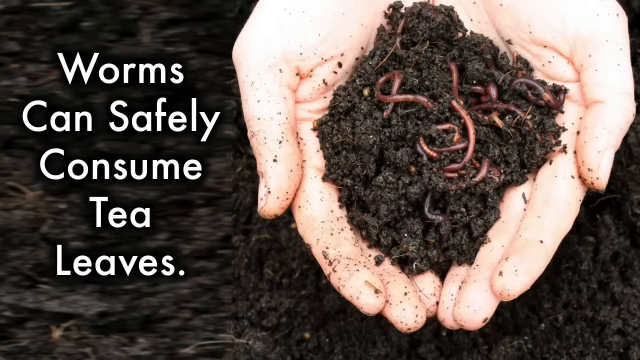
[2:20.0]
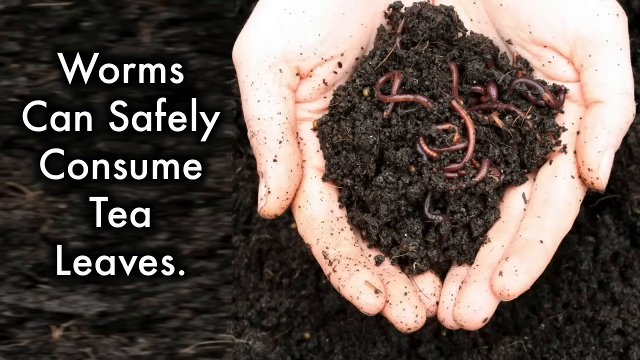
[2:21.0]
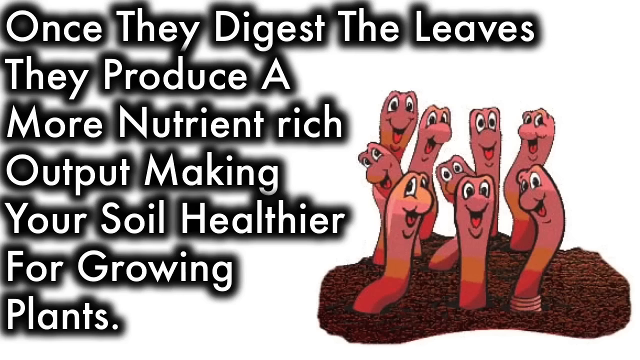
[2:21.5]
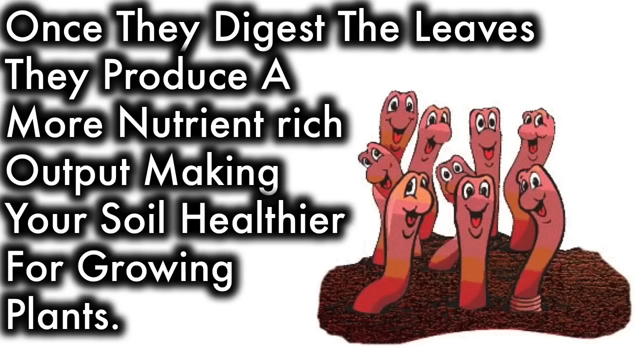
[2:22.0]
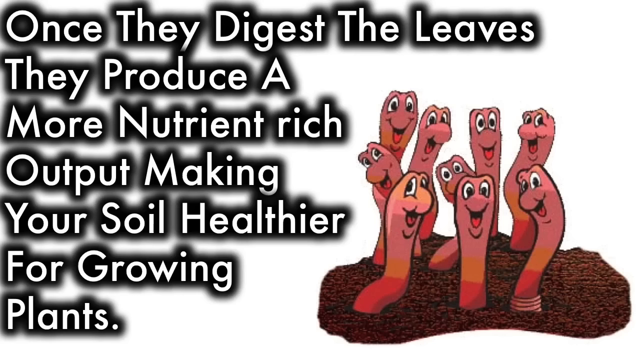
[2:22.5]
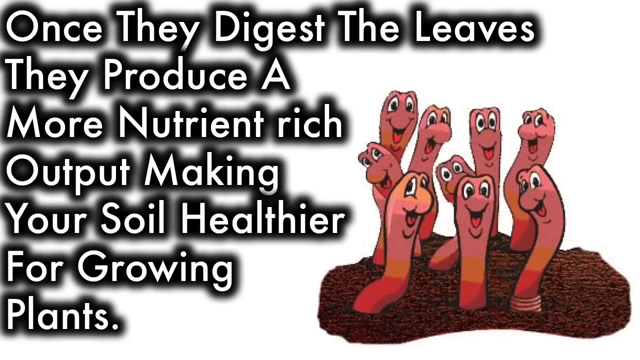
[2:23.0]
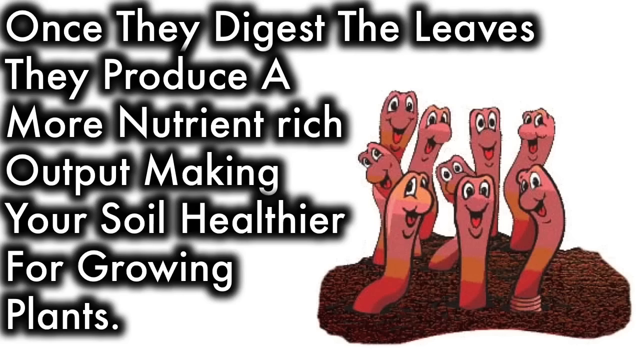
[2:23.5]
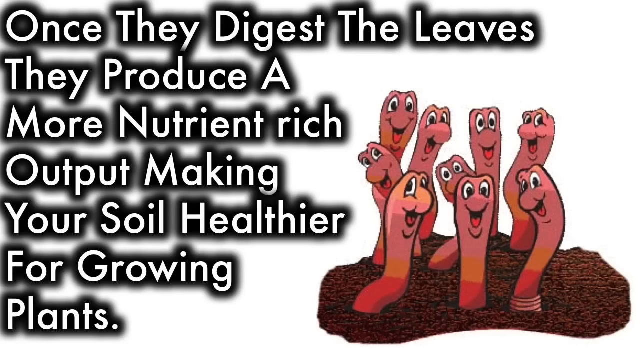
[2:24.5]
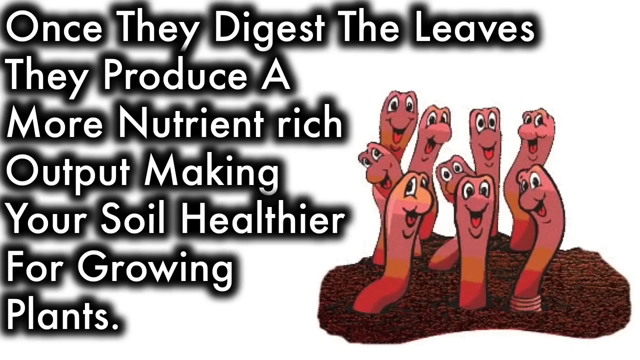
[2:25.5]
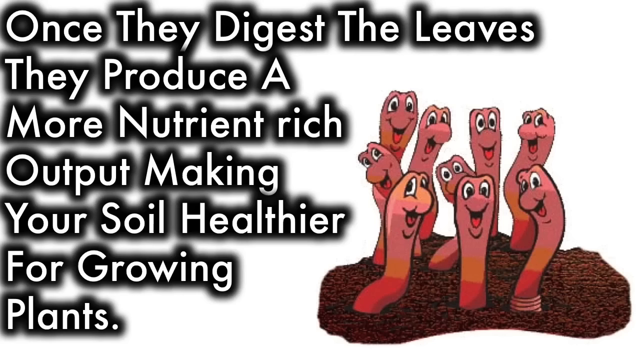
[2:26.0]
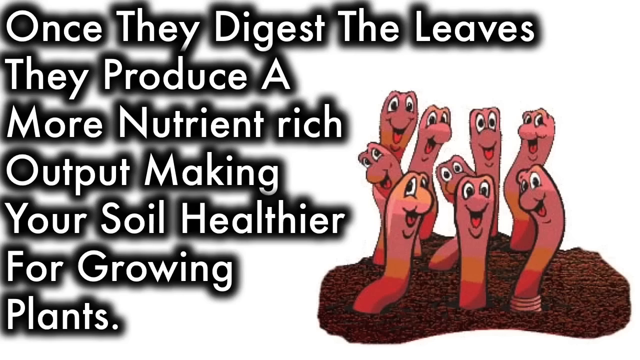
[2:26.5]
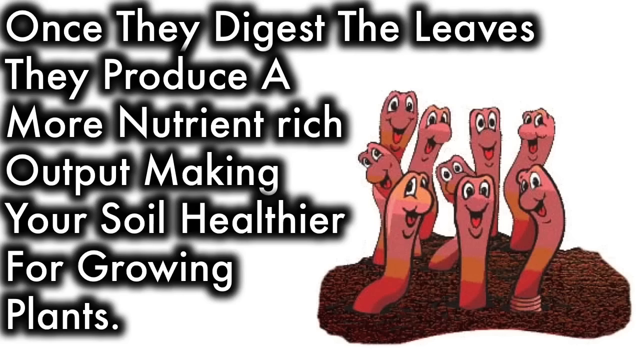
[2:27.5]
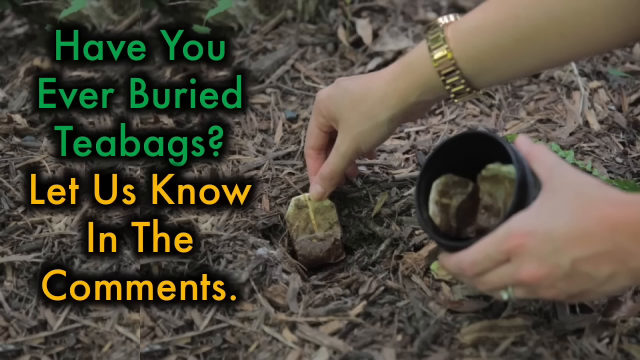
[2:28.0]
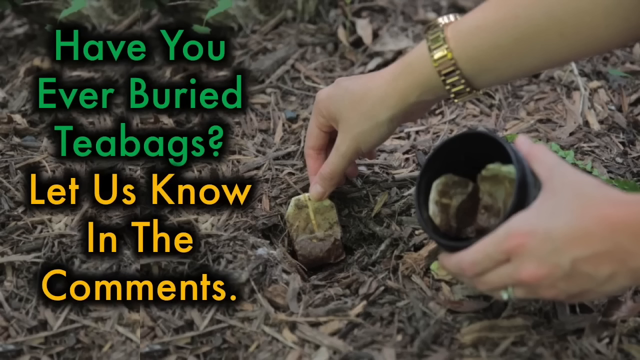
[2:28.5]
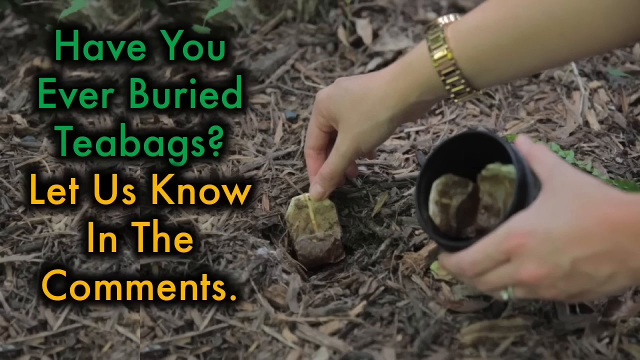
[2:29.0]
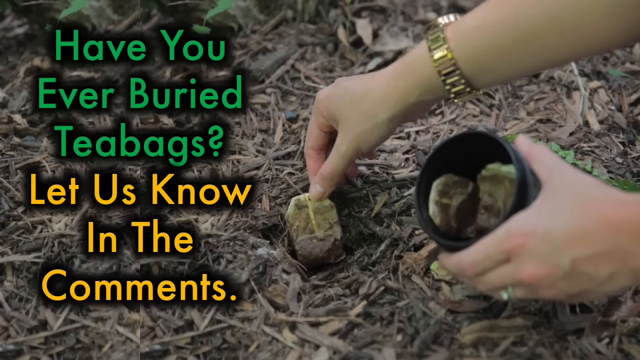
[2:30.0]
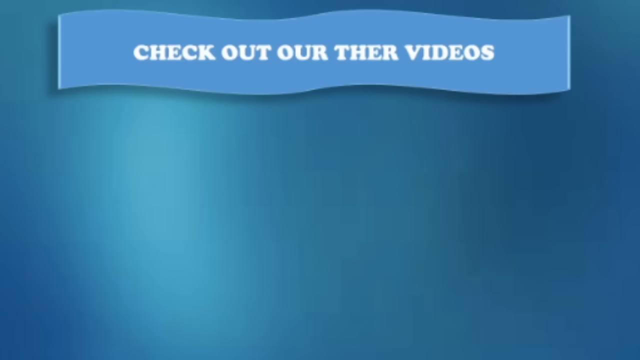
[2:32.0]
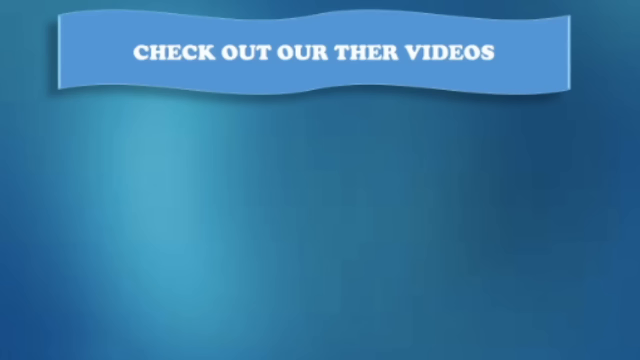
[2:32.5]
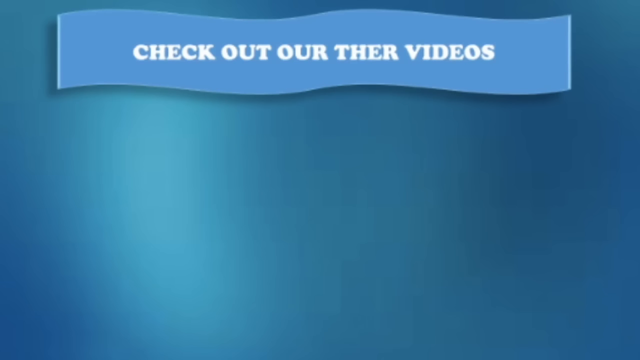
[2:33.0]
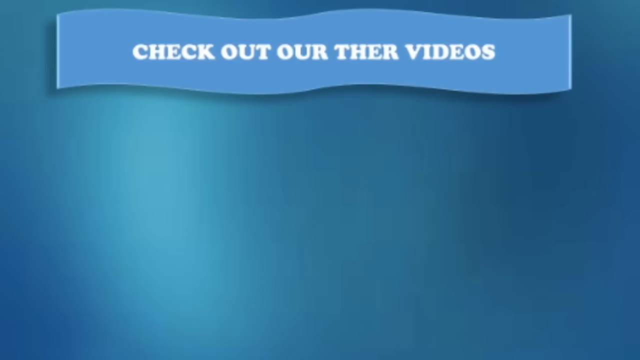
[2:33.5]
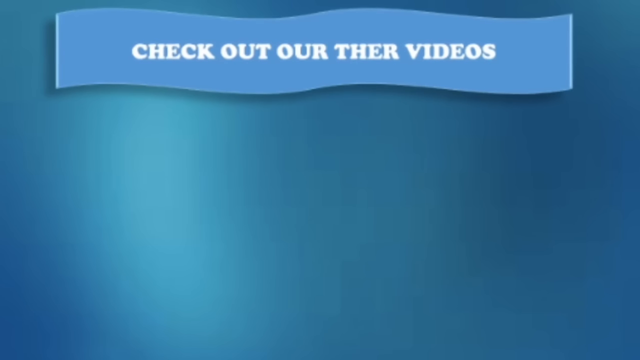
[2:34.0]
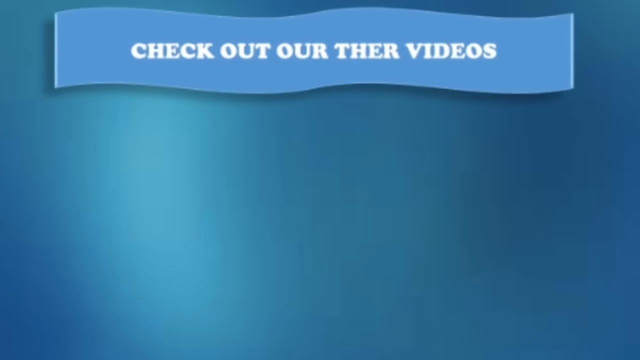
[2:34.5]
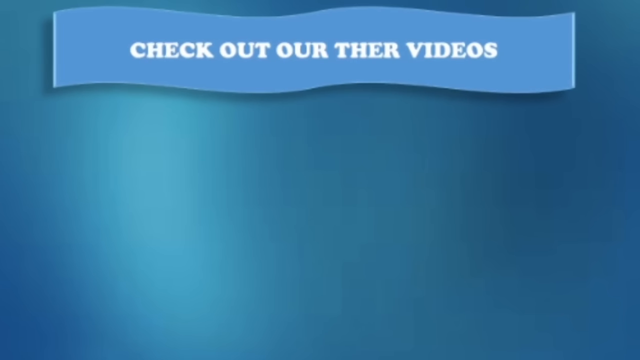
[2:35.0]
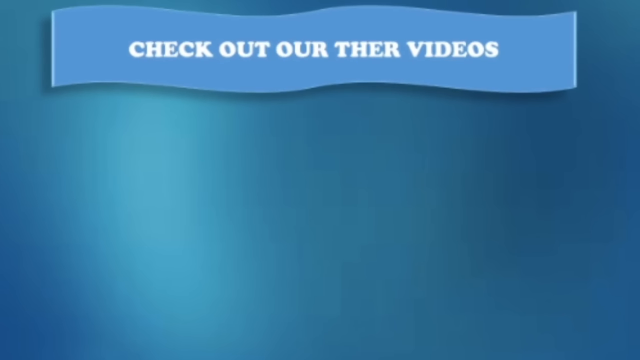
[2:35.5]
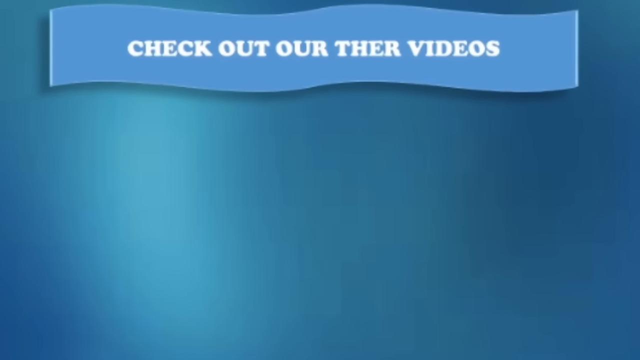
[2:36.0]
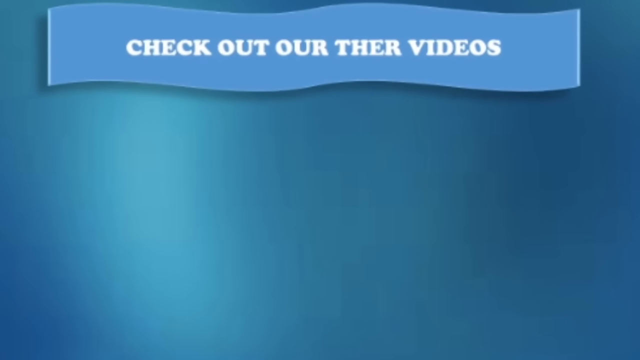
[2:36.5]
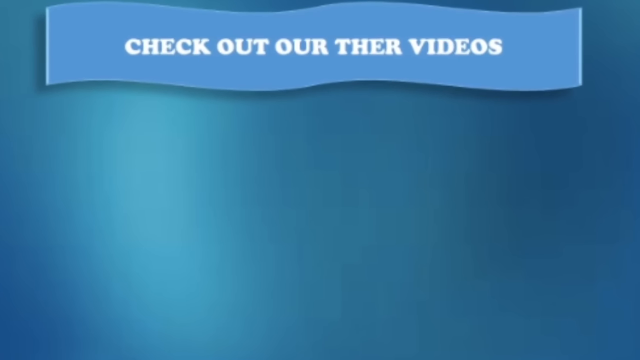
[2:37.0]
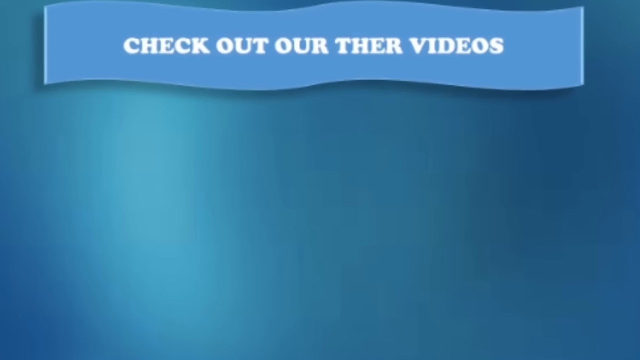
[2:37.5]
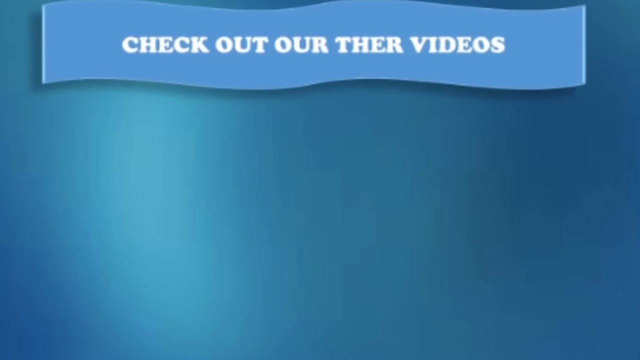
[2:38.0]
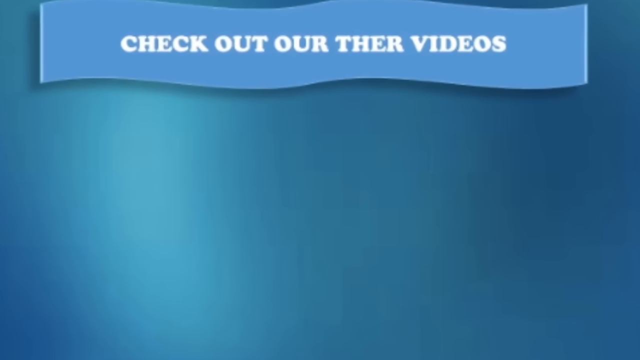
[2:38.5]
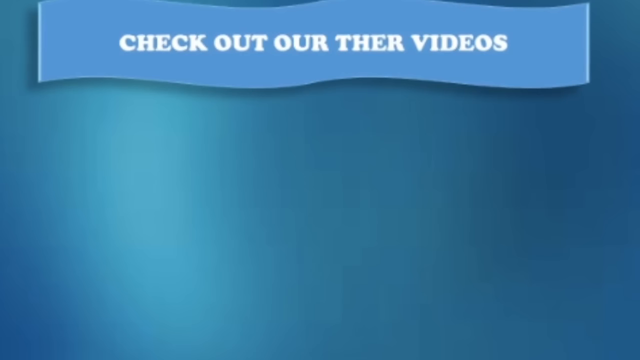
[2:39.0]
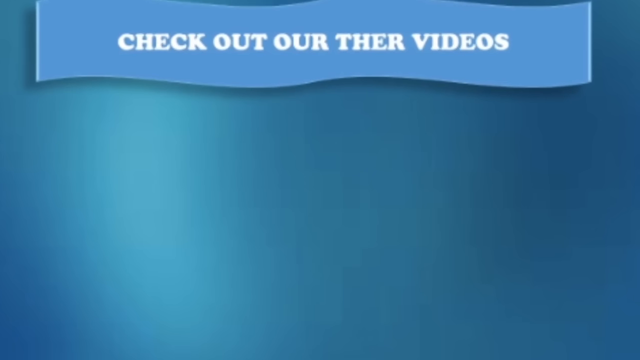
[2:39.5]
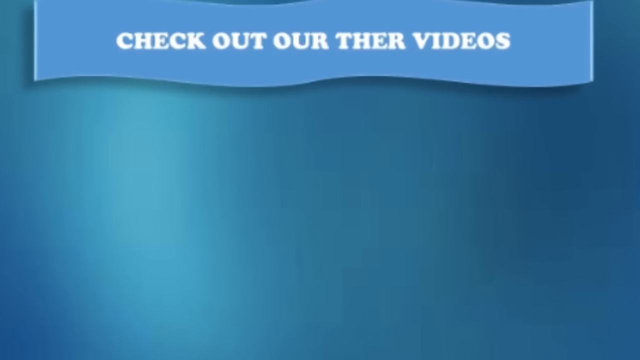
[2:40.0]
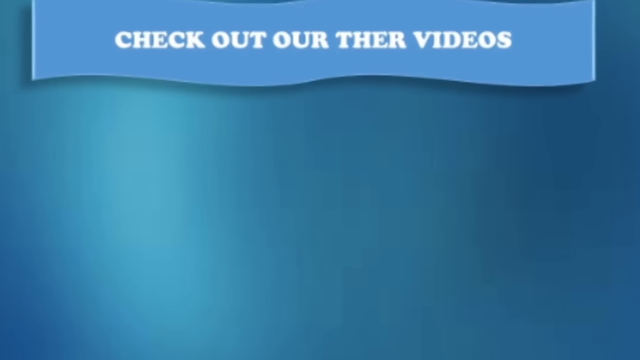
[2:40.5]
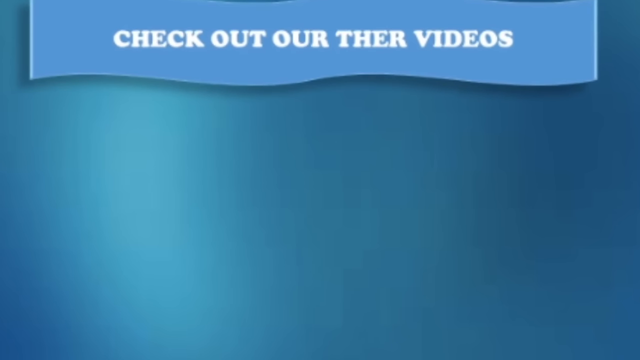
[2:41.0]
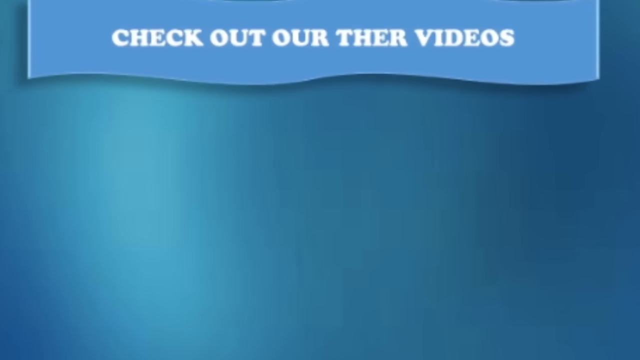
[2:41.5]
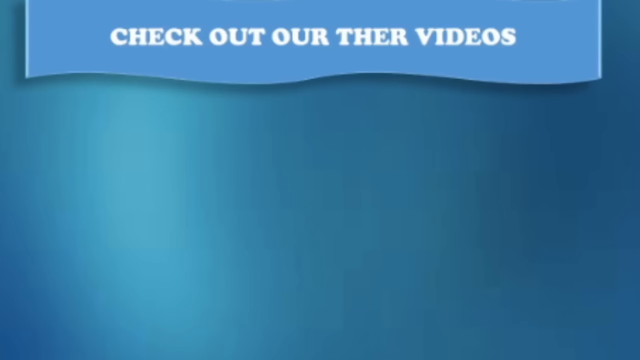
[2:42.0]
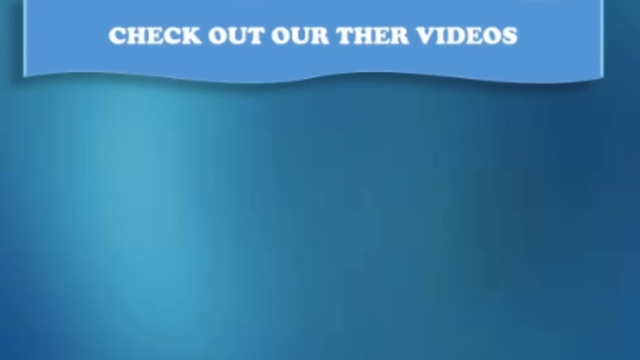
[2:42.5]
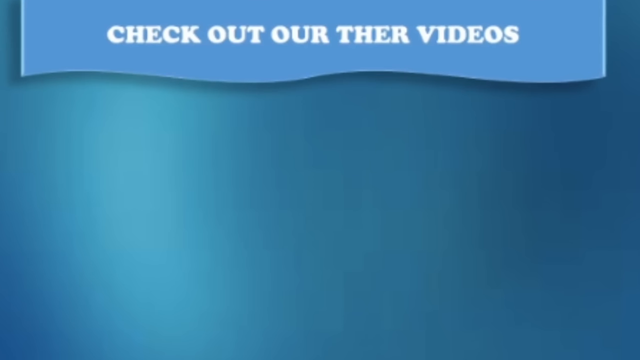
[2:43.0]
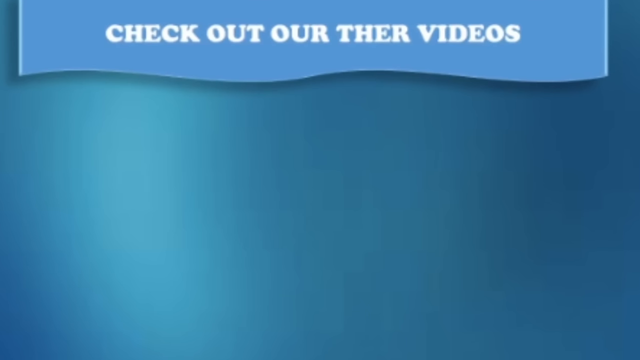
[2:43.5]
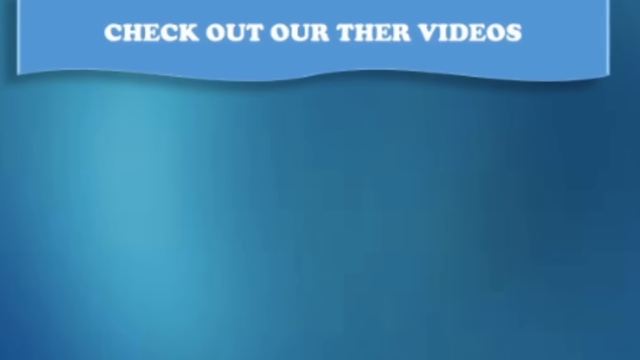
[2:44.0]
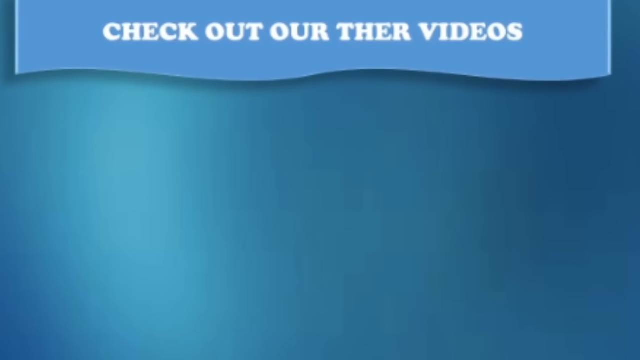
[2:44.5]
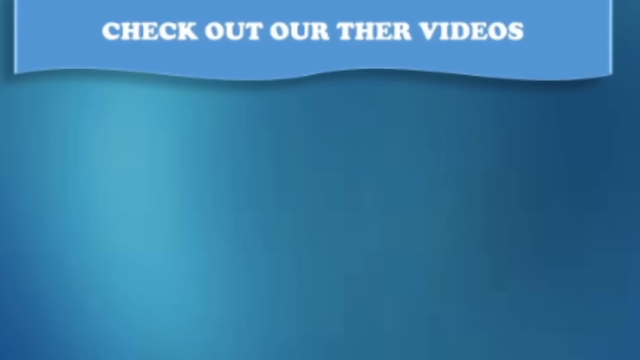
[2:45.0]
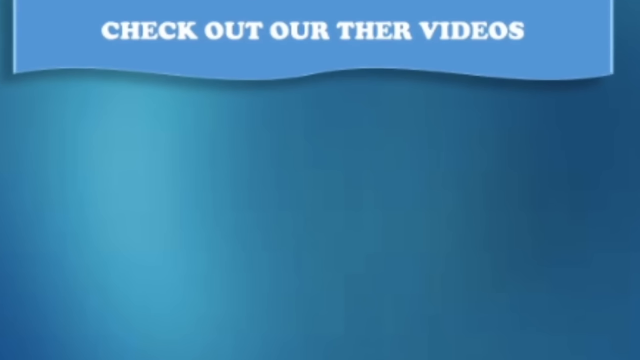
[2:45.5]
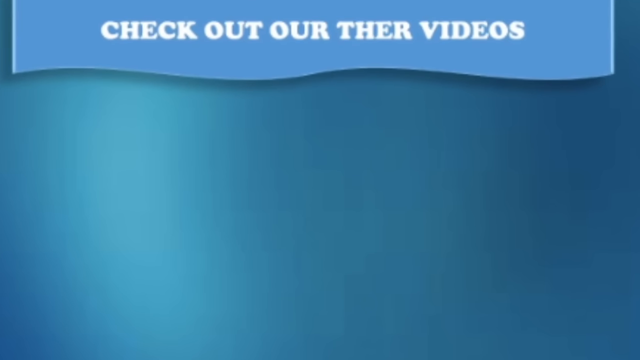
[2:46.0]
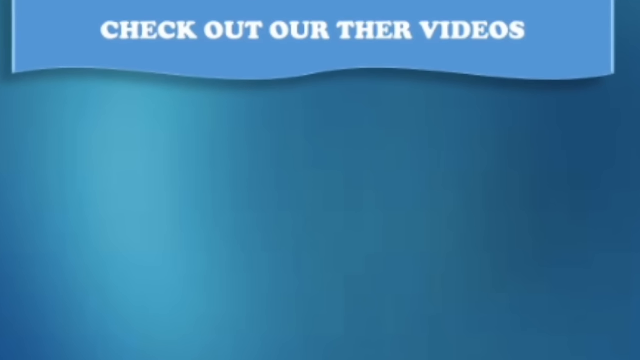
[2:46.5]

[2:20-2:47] Text reads: "worms can safely consume tea leaves. Once they digest the leaves, they produce a more nutrient rich output, making your soil heavier for growing plants," and worms are shown. Then the text "Have you ever buried a teabag? Let us know in the comment section" appears, with a picture of a man burying teabags. Closing text begins "check out our", apparently referring to another video.